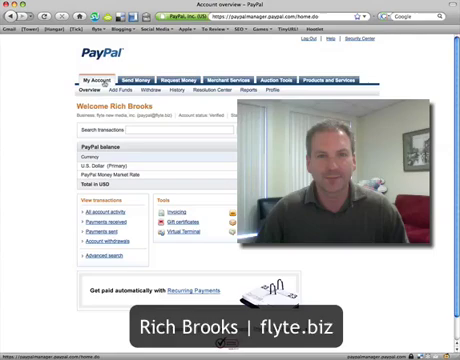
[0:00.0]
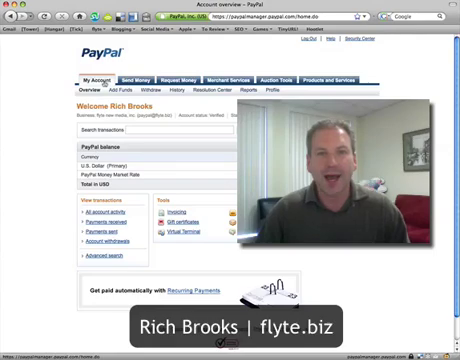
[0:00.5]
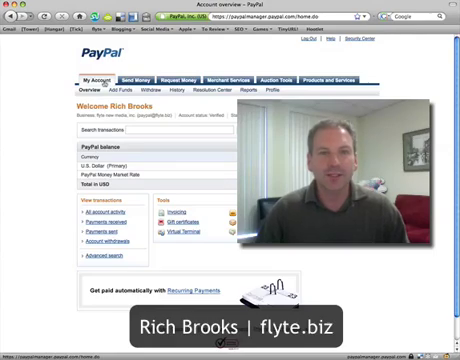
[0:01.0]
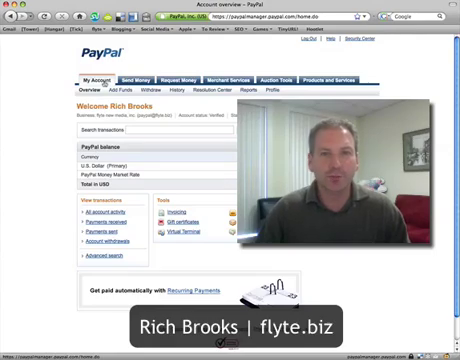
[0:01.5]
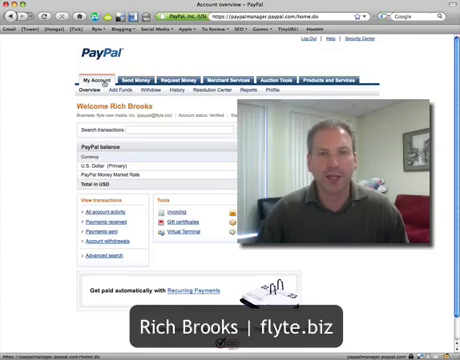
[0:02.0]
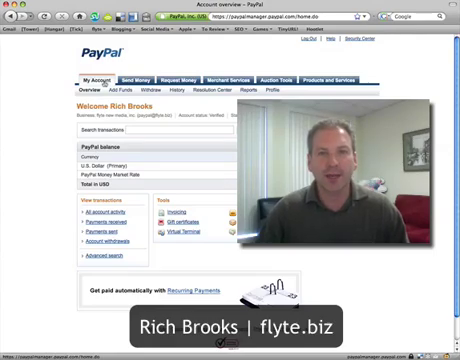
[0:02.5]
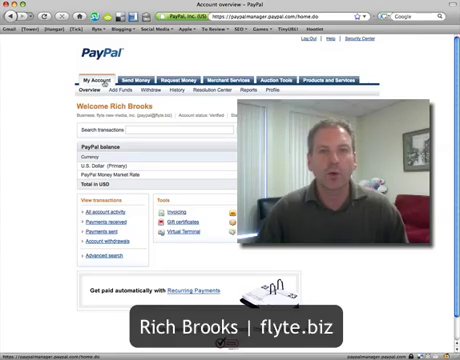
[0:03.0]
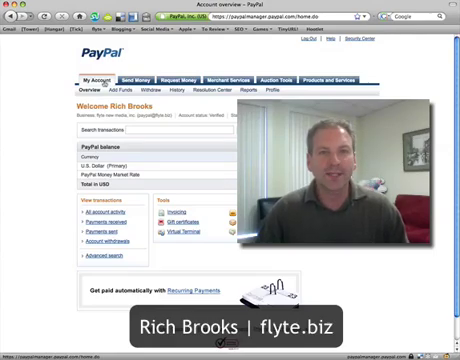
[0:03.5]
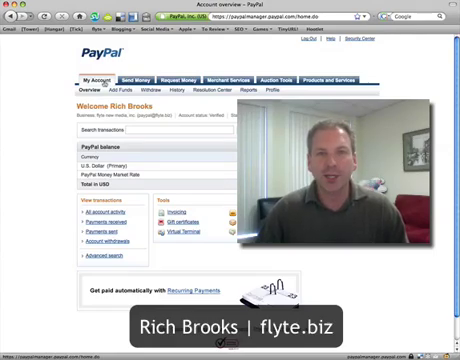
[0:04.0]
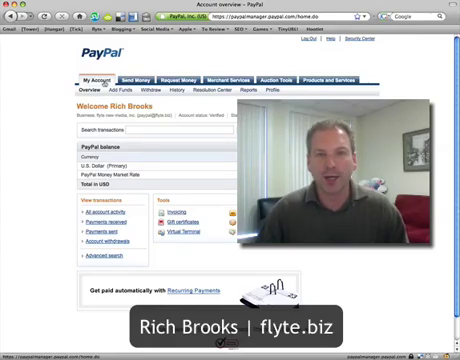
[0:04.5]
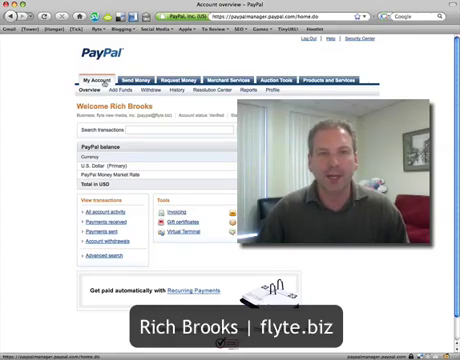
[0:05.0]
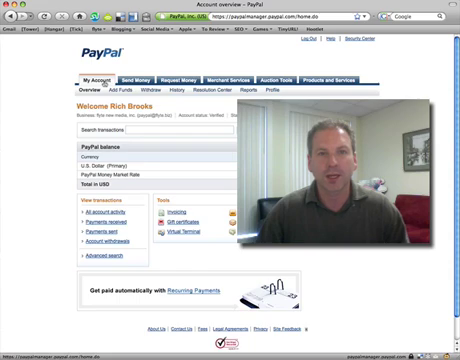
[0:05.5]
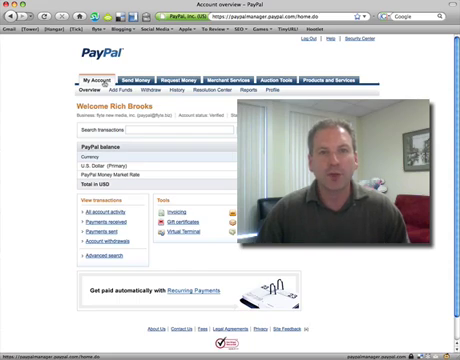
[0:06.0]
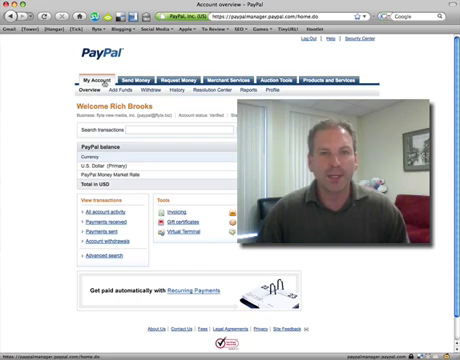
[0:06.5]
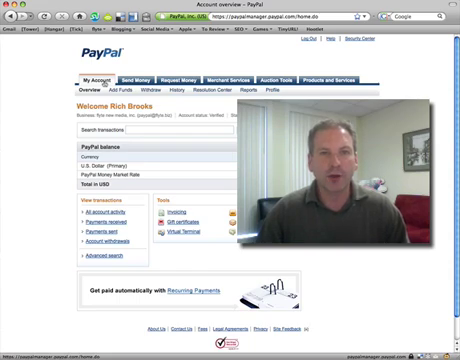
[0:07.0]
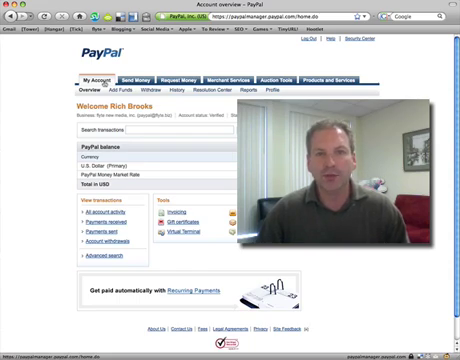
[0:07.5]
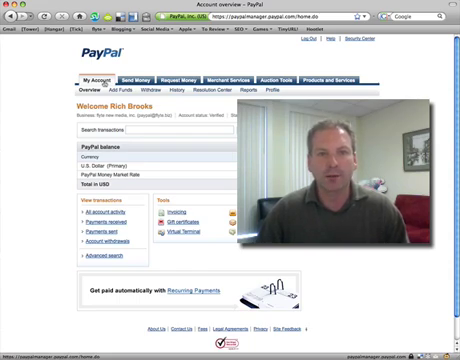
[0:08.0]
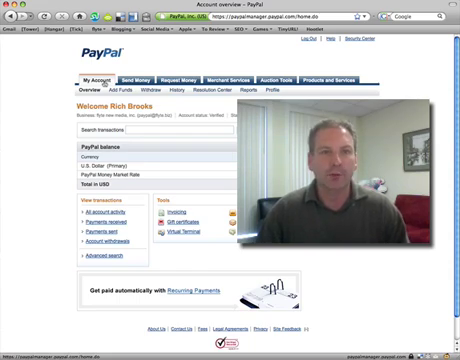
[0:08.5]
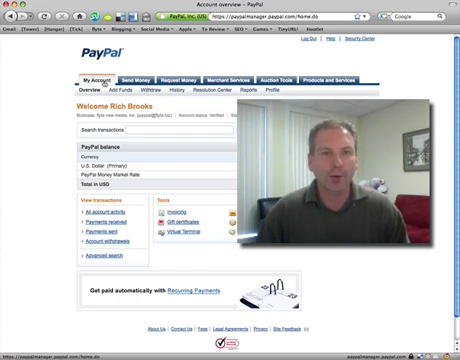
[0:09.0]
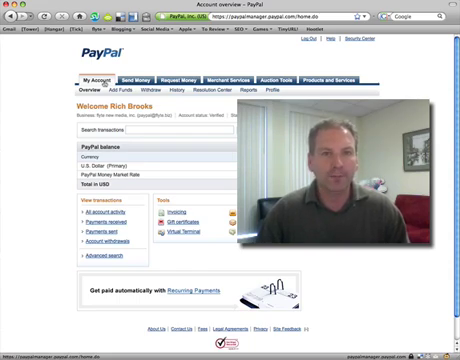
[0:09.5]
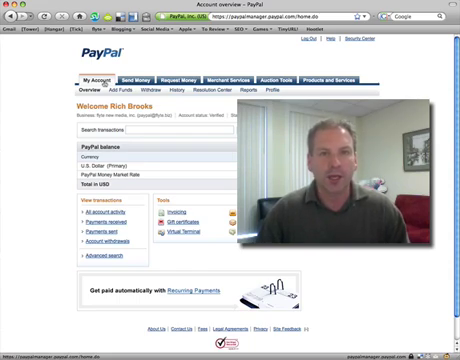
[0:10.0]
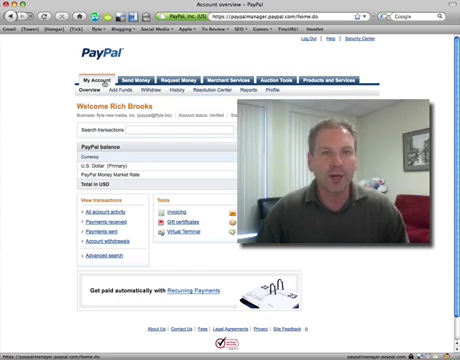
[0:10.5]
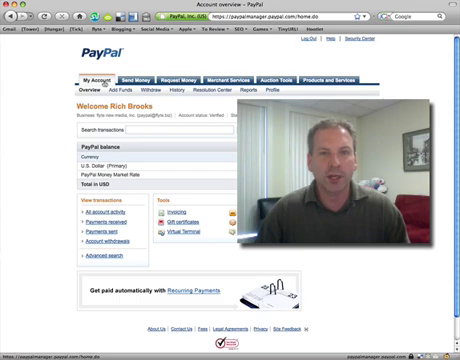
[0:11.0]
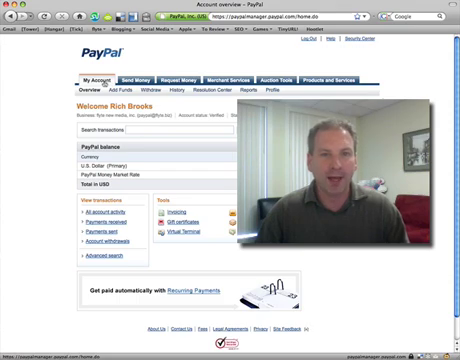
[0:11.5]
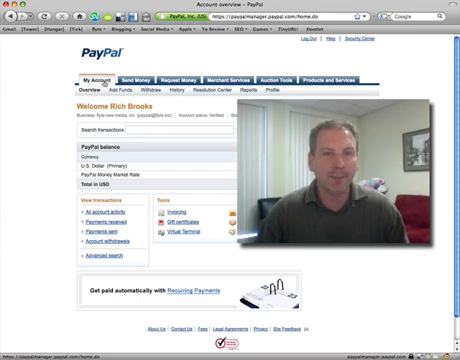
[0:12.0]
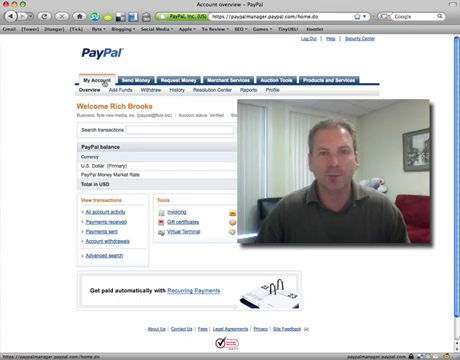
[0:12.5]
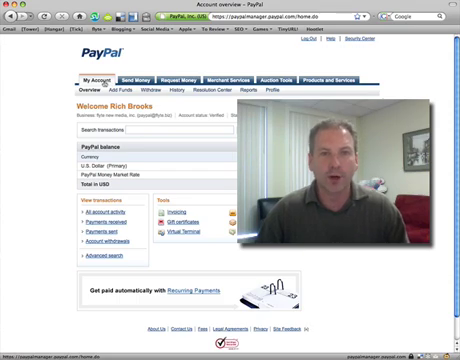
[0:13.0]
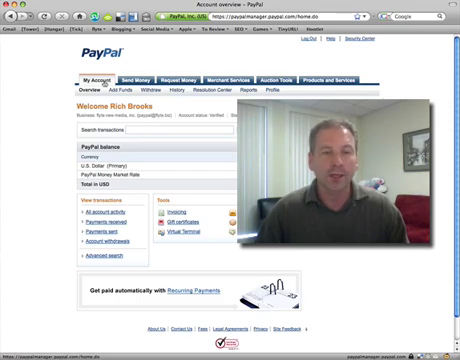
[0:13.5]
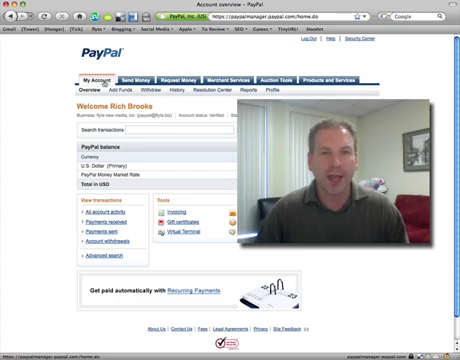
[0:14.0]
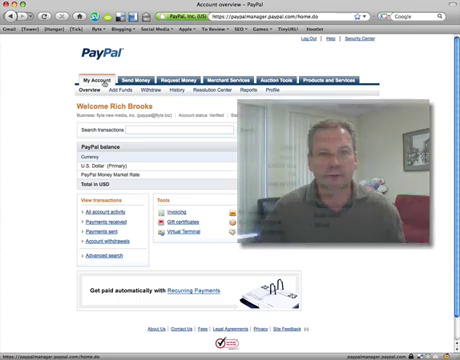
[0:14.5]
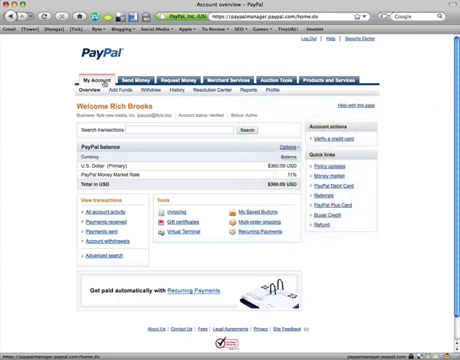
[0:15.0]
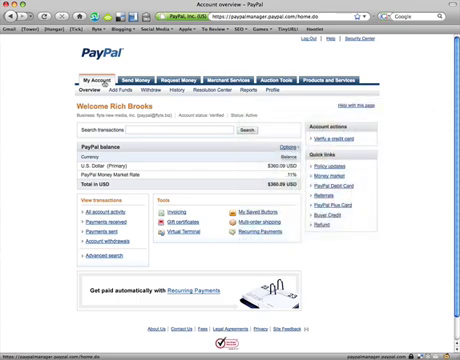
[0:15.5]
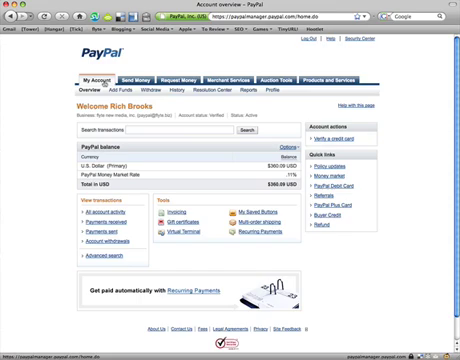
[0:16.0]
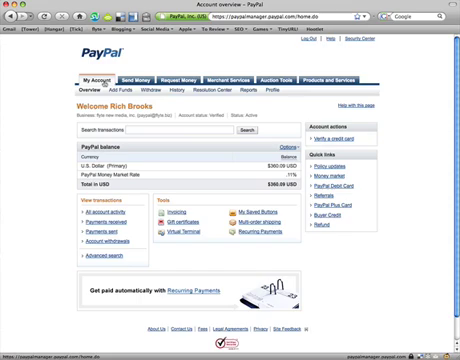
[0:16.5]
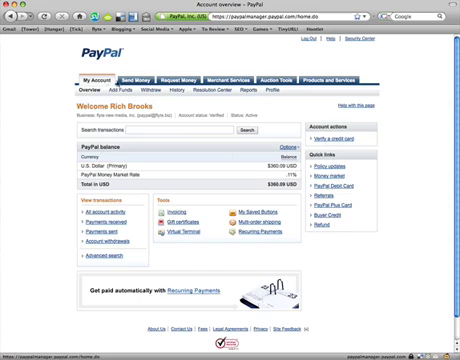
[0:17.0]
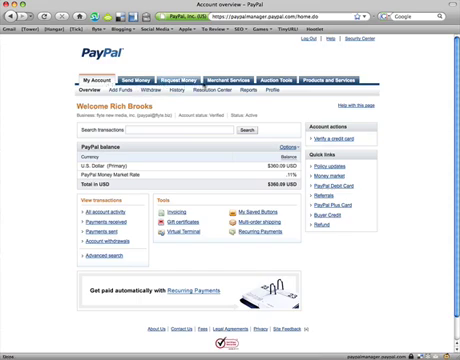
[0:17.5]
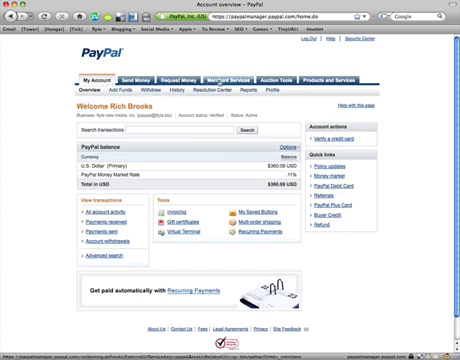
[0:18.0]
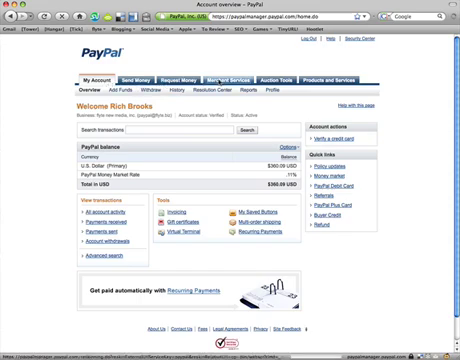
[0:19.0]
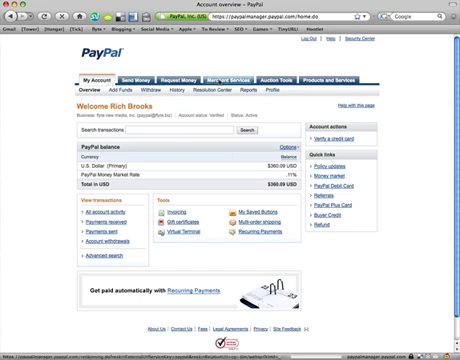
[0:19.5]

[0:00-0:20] The video opens as a screen recording of an older Apple computer, as indicated by the red, yellow, and green dots in the top left-hand corner of the screen. The PayPal logo is present, and the website seems to show PayPal's Account Overview. The page title reads "Welcome Rich Brooks," which seems to be the name of the account holder. A black banner at the bottom of the screen reads "Rich Brooks, Flight.biz." Along the right-hand side of the screen, taking up the center, is a webcam overlay showing a Caucasian man with short gray hair sitting in the living room of his house, with a black sofa and a red sofa in the background, floor-to-ceiling curtains, and a painting, gray in nature, on the right-hand side of the screen. The man speaks into the webcam, maintaining eye contact and not moving his arms at all. The webcam overlay then fades away and the full PayPal screen is visible, showing a PayPal balance of $300 and a PayPal money market rate of 11%, along with other menus and functions. A line of tabs at the top of the screen shows My Accounts, Send Money, Request Money, Merchant Services, Auction Tools, and Products and Services. The cursor clicks on My Accounts, which brings up the submenu options Overview, Add Funds, Withdraw, History, Resolution Center, Reports, and Profile. The cursor then moves over to the Merchant Services tab and clicks on it.